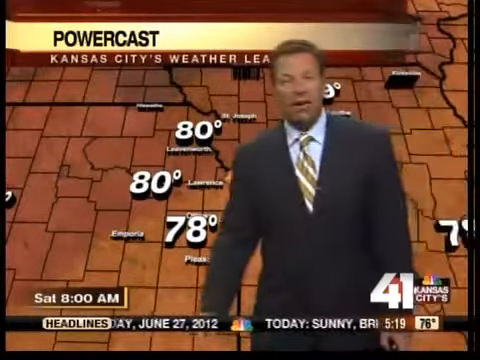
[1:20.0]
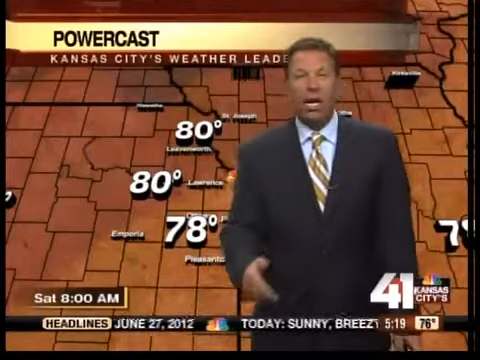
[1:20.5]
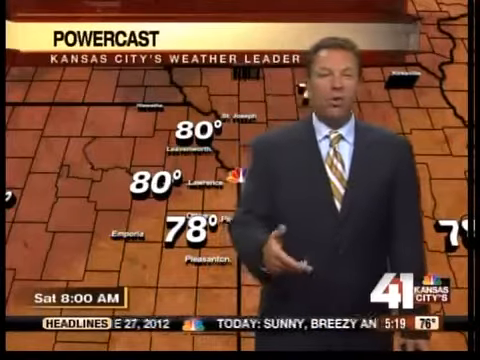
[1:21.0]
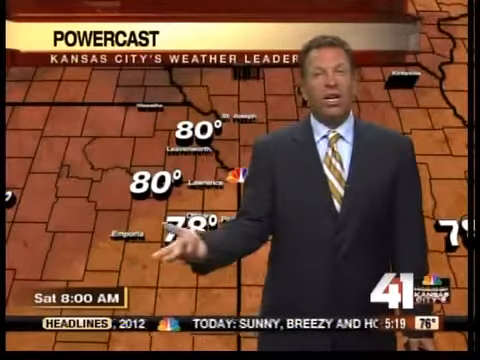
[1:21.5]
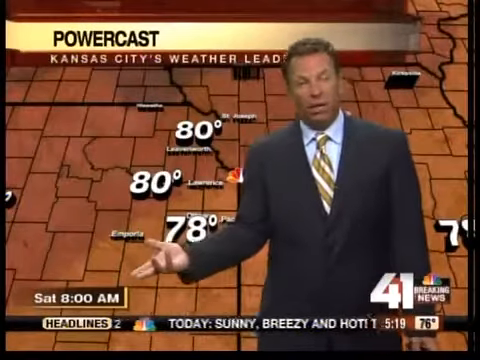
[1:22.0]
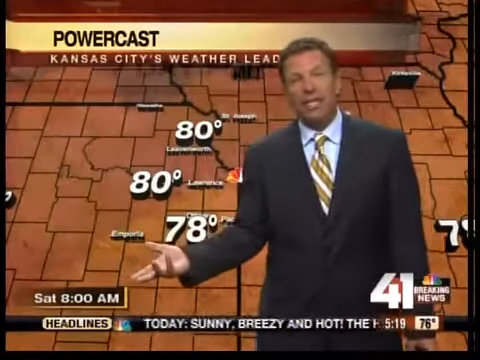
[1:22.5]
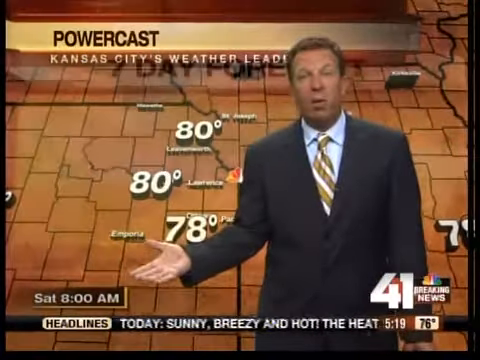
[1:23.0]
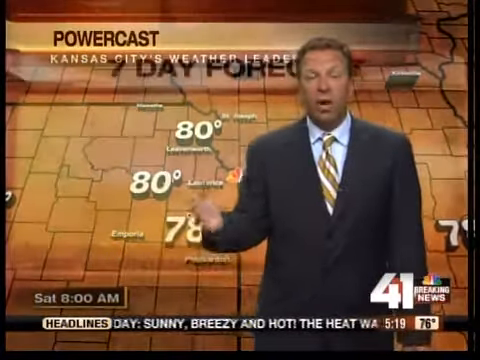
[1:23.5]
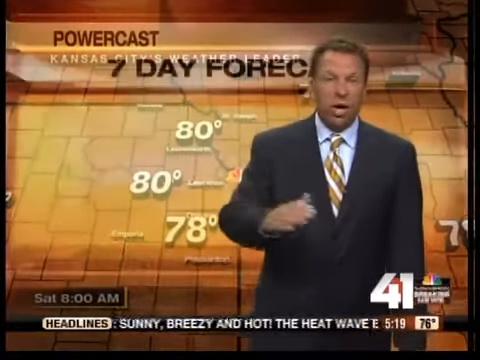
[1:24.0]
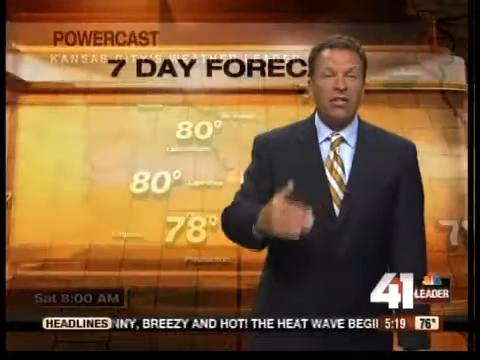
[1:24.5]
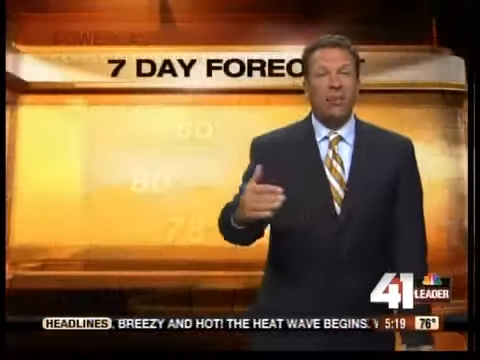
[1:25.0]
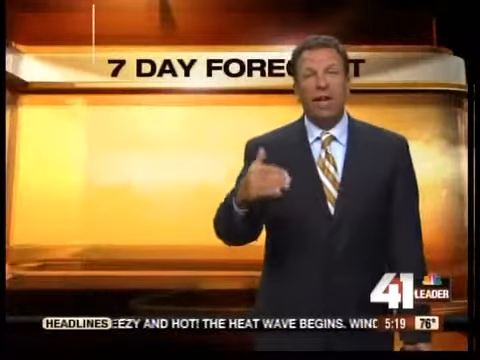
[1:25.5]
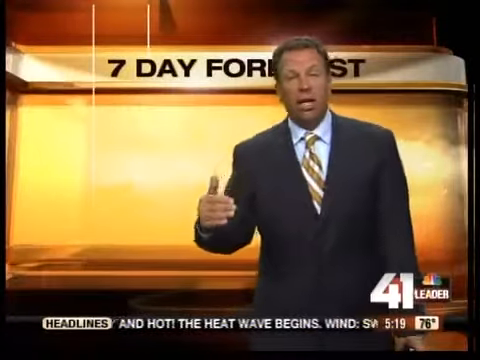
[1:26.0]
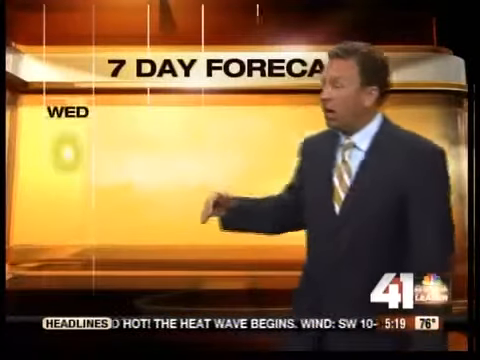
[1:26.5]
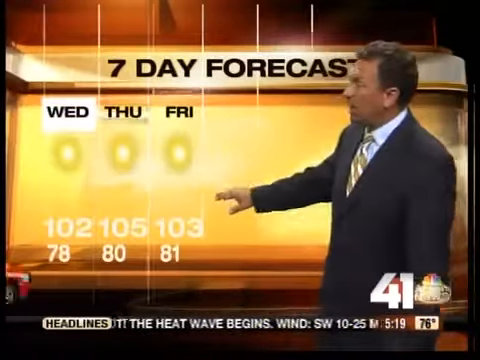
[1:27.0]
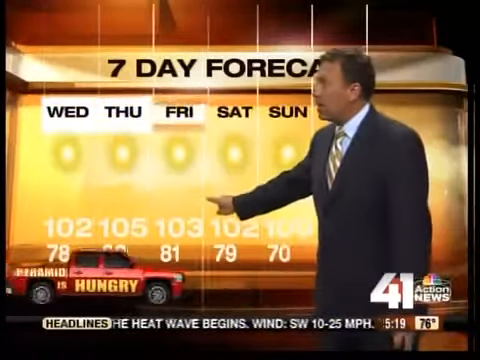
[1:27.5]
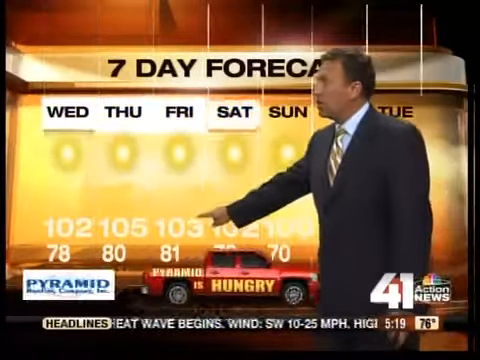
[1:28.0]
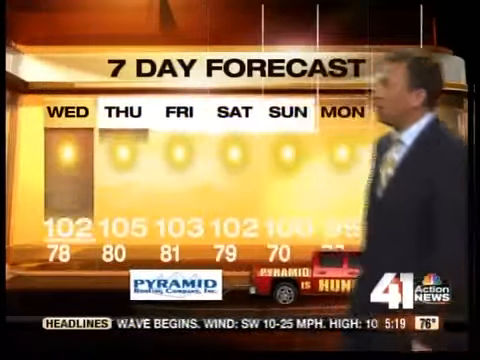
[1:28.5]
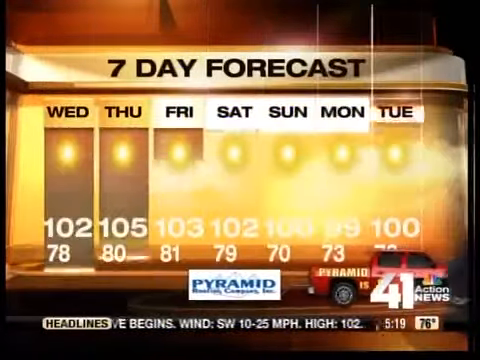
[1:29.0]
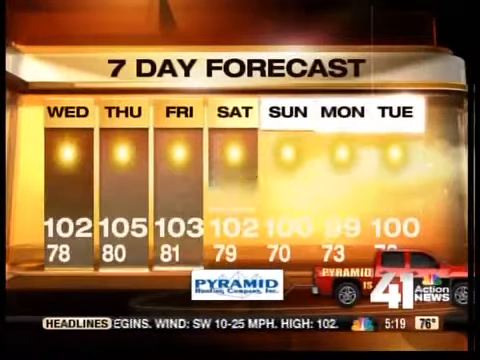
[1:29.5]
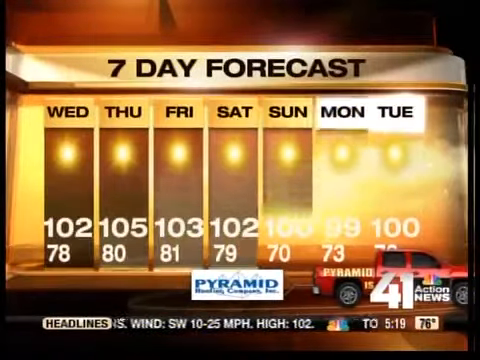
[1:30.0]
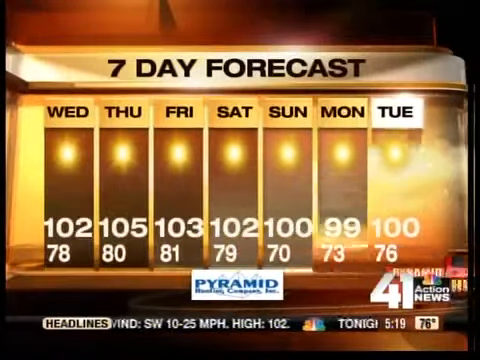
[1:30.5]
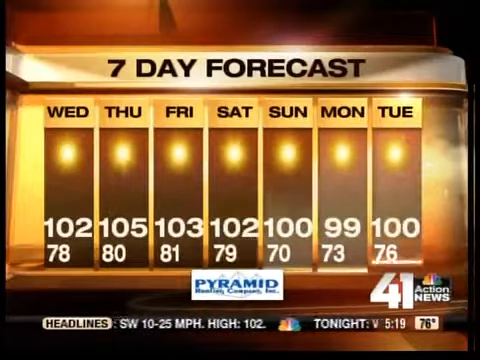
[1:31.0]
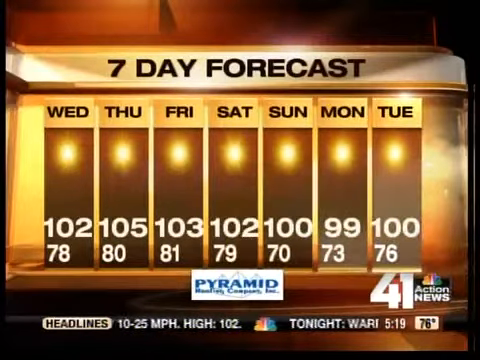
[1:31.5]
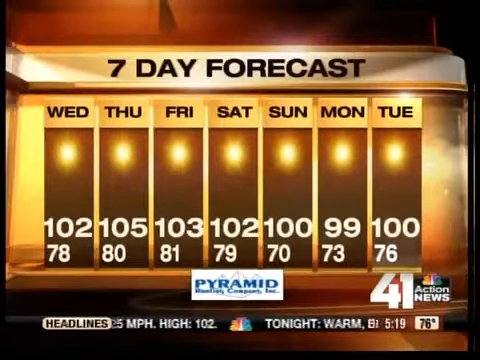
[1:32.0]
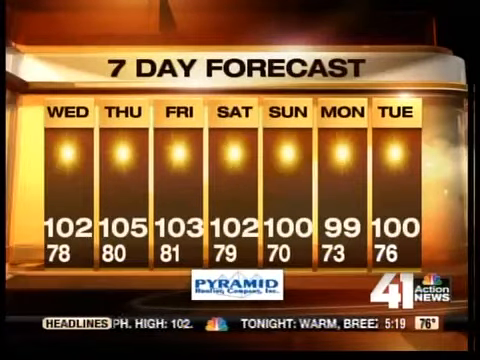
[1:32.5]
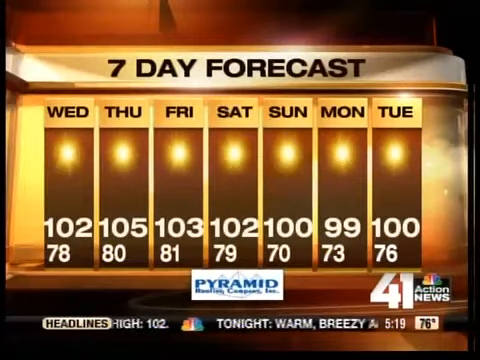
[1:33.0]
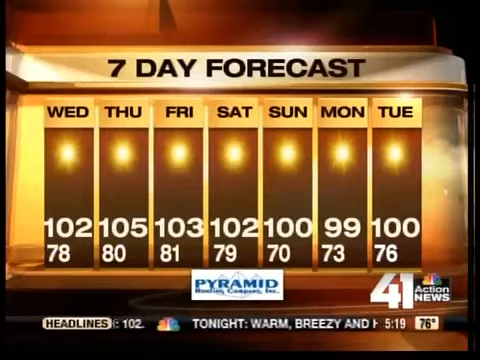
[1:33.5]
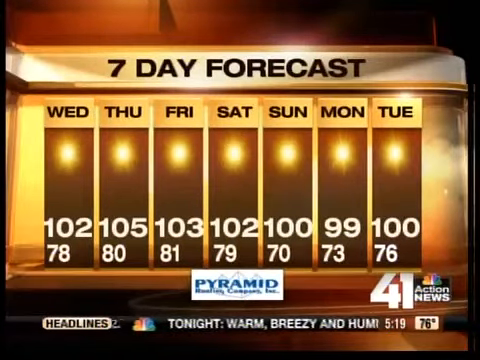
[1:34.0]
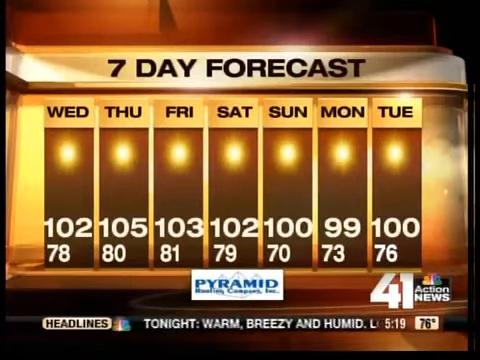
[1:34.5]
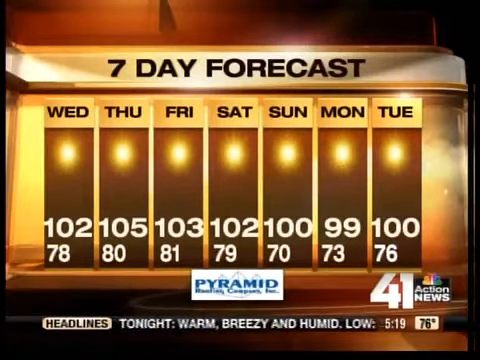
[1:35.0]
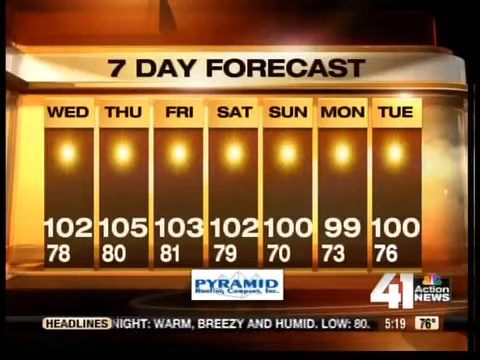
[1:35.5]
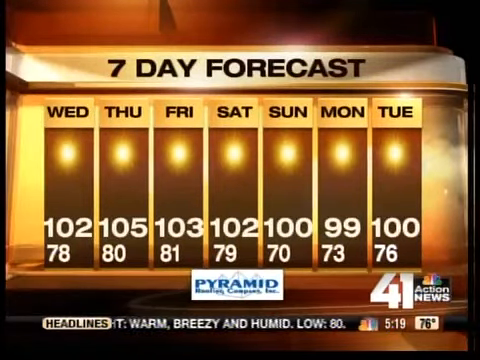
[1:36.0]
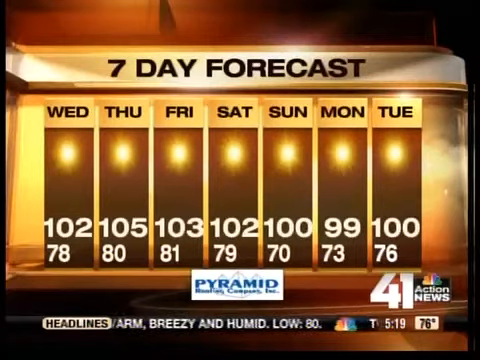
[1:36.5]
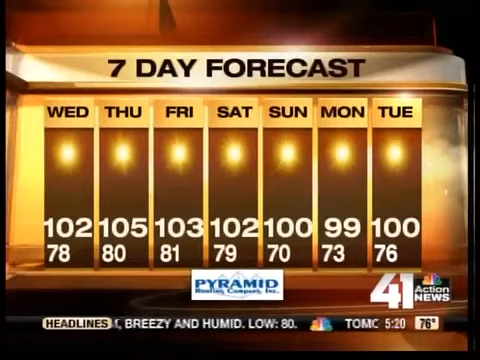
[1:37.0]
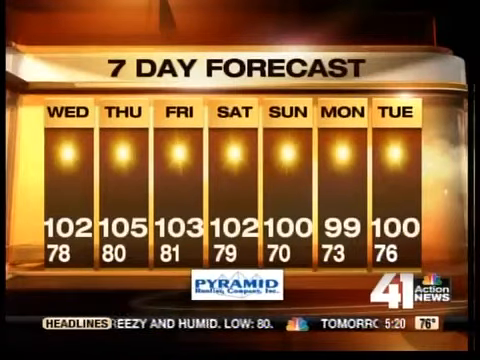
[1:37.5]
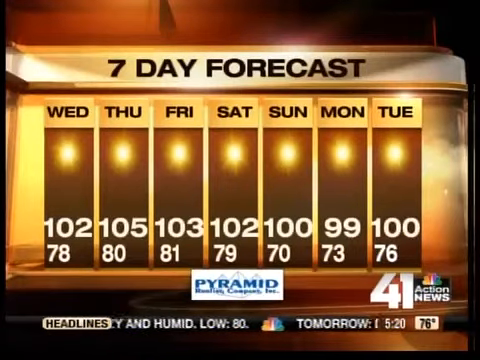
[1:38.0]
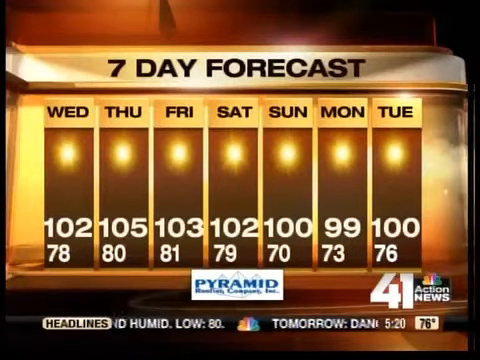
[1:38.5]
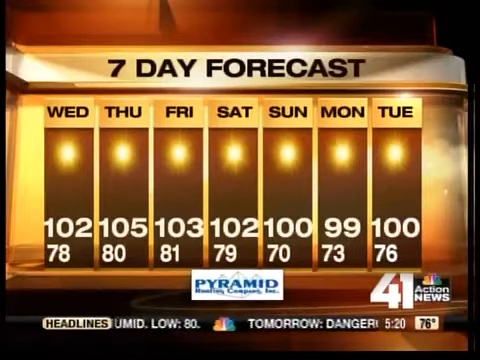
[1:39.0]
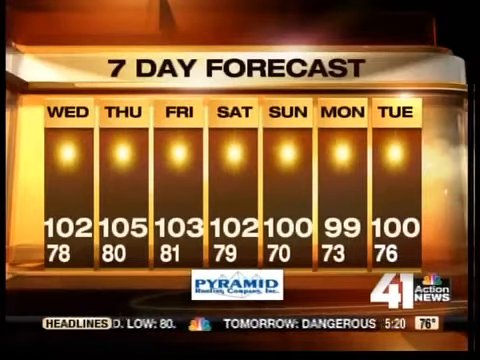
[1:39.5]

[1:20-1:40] The man continues moving toward the camera, then stops and faces it, speaking. He gestures outward with his right hand as if welcoming somebody to something, continues speaking, and gestures with his right hand again in a flip-flop motion. He then turns his hand horizontally so the back of his fingers faces the camera and gestures outward with it. He moves back toward the screen, then off toward the right side, and walks backward out of frame, revealing the seven-day forecast image showing the forecast from Wednesday to Tuesday: Wednesday 102, Thursday 105, Friday 103, Saturday 102, Sunday 100, Monday 99 and Tuesday 100. At the bottom of the screen is a box that says "pyramid", likely the sponsor of the segment. Ticker text scrolls from right to left along the bottom, reading "tonight warm, breezy, and humid. Low 80 degrees."